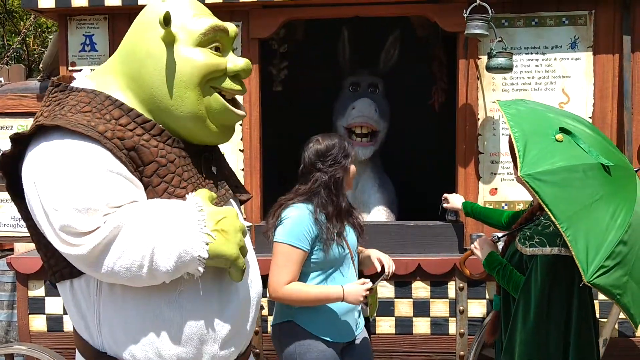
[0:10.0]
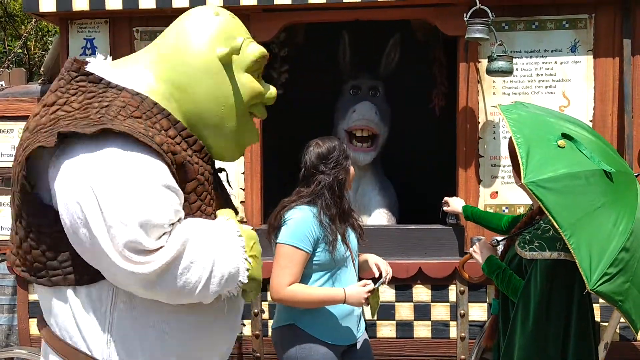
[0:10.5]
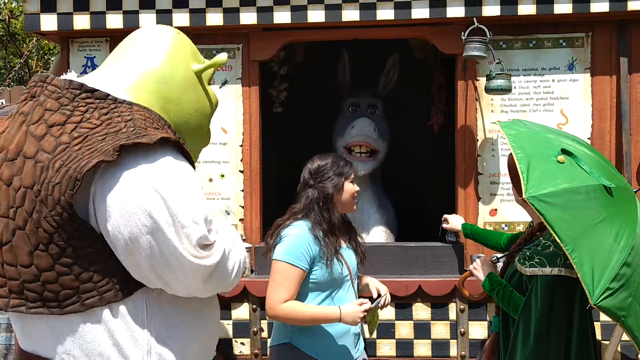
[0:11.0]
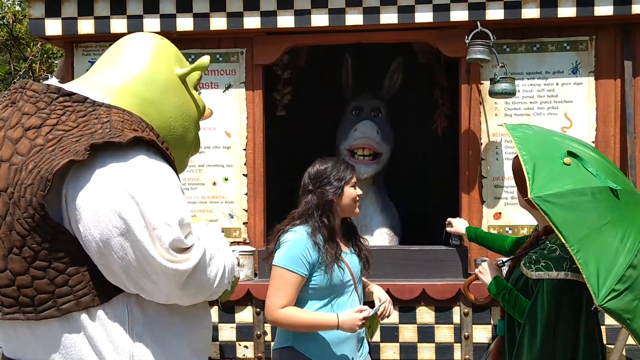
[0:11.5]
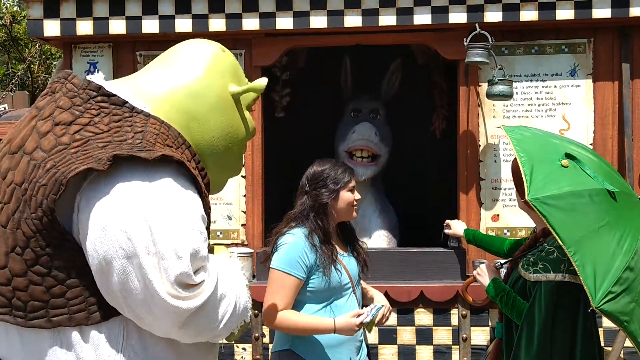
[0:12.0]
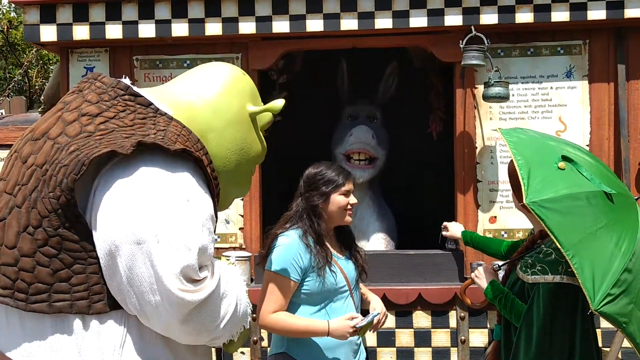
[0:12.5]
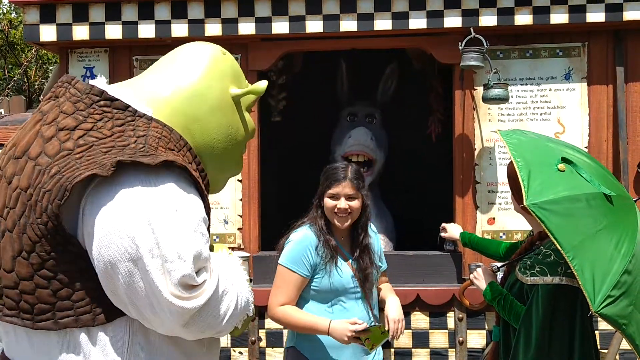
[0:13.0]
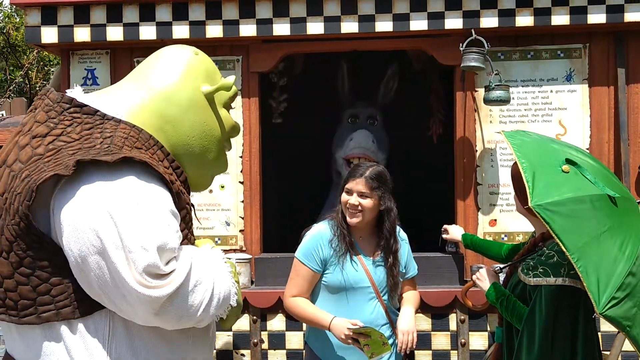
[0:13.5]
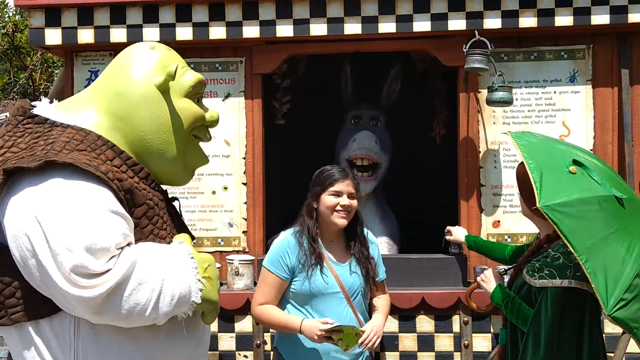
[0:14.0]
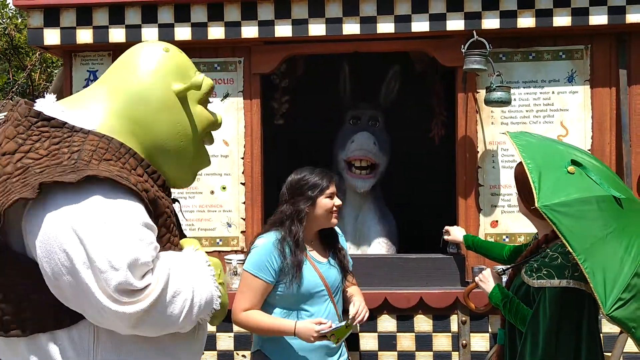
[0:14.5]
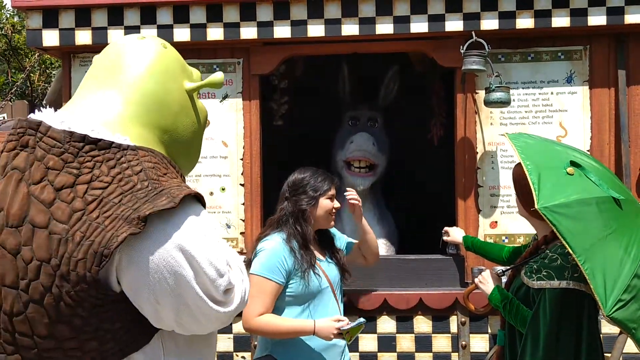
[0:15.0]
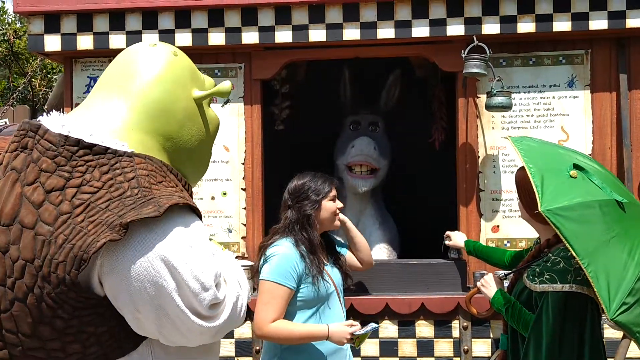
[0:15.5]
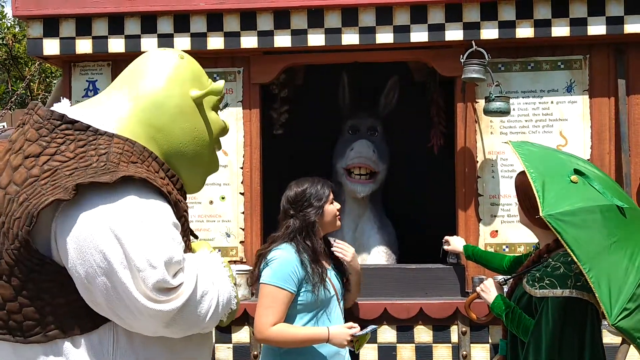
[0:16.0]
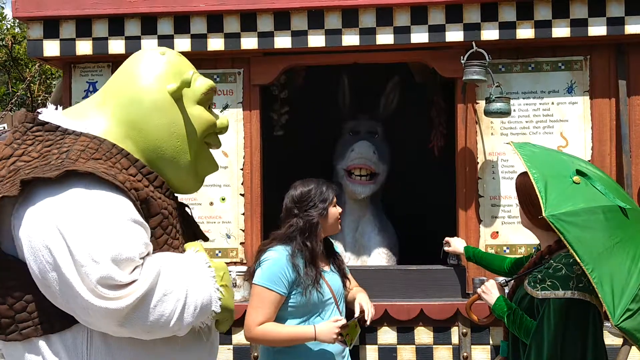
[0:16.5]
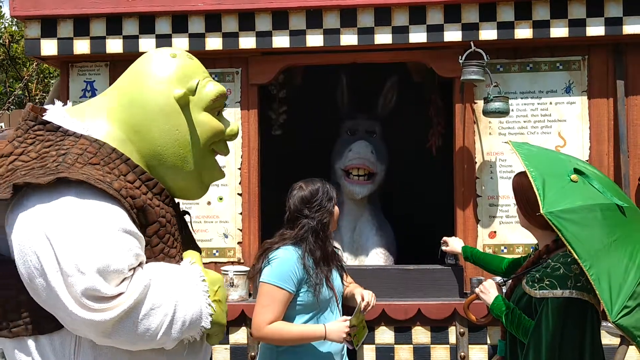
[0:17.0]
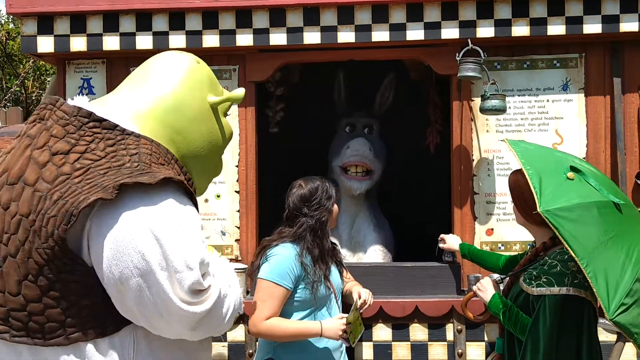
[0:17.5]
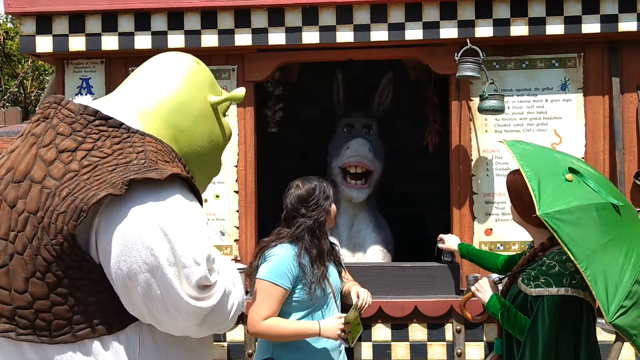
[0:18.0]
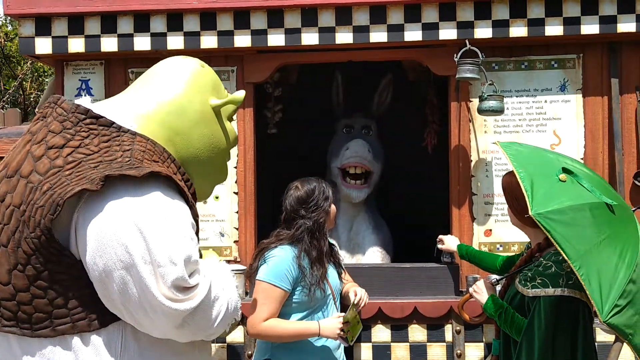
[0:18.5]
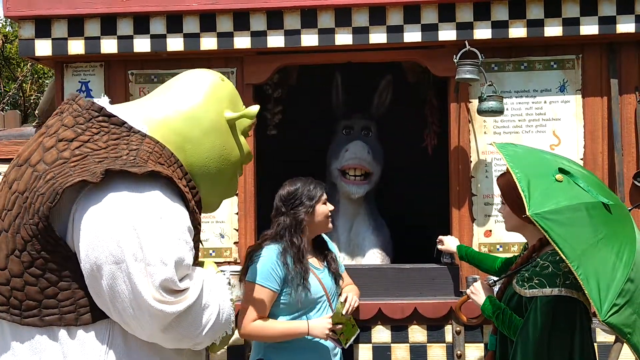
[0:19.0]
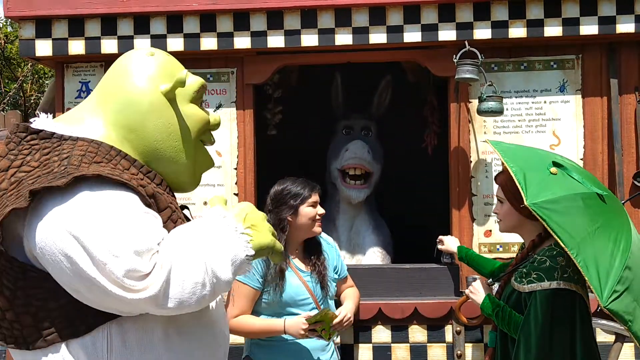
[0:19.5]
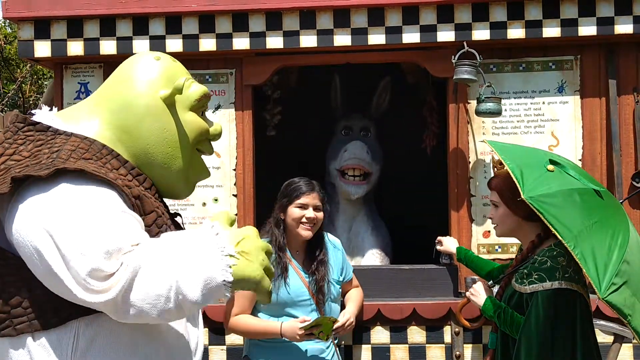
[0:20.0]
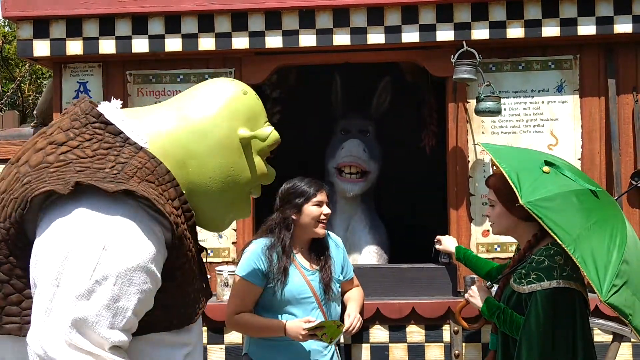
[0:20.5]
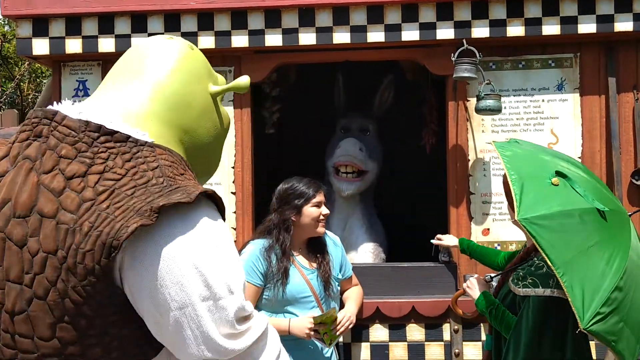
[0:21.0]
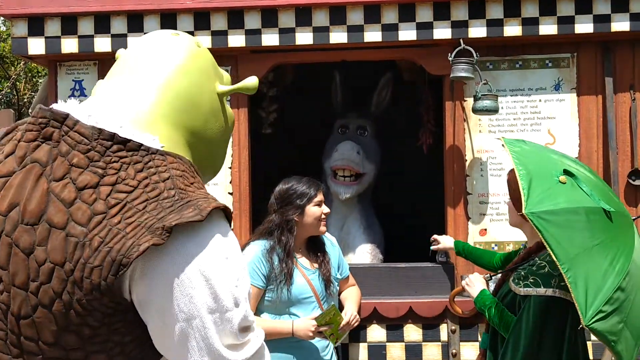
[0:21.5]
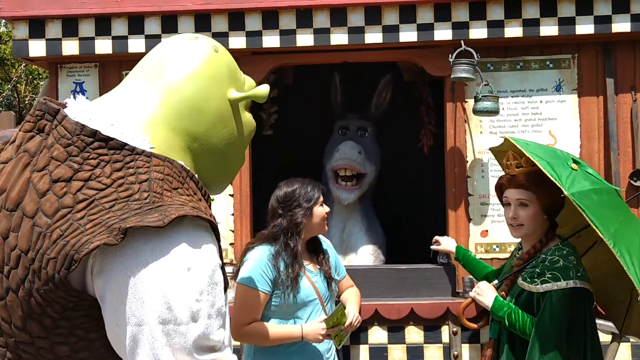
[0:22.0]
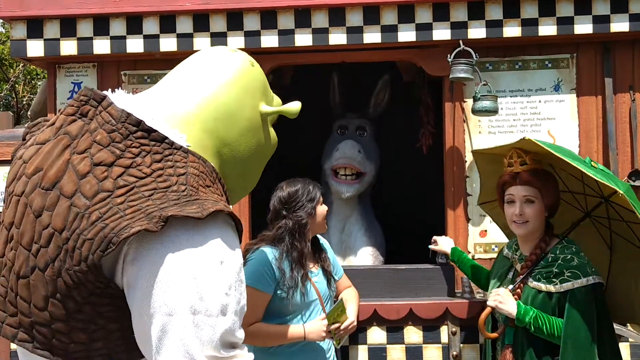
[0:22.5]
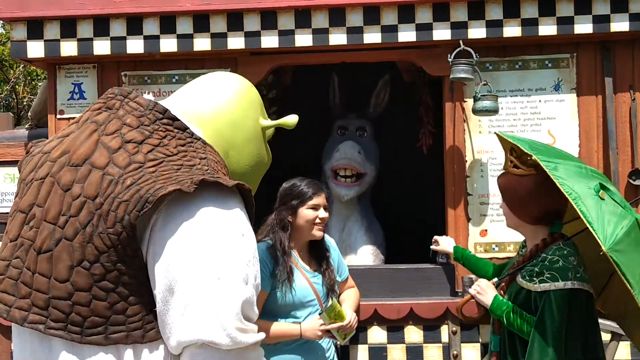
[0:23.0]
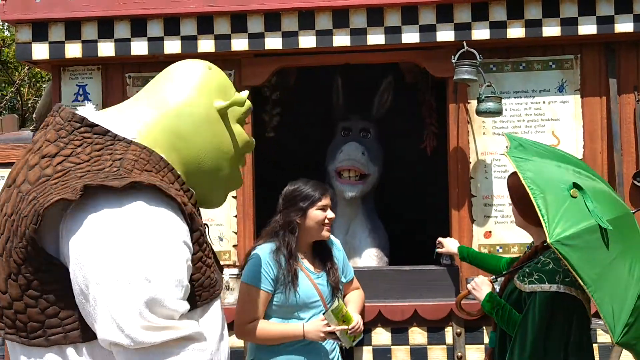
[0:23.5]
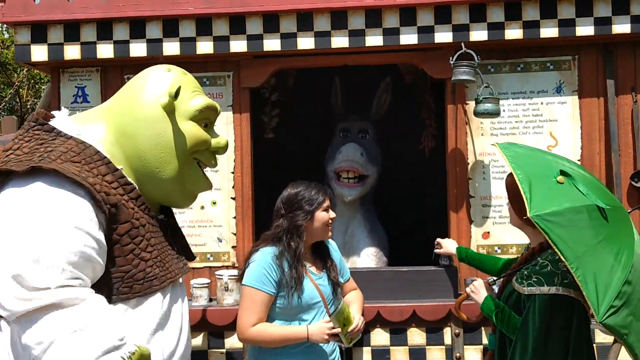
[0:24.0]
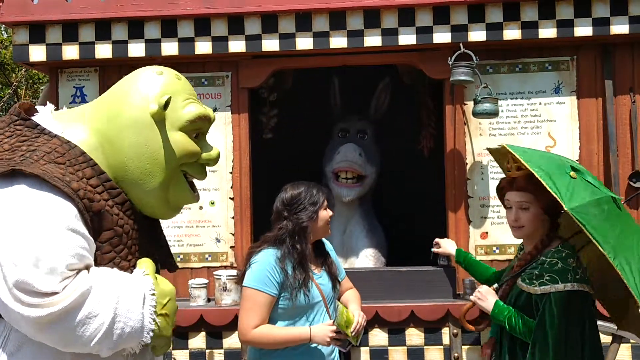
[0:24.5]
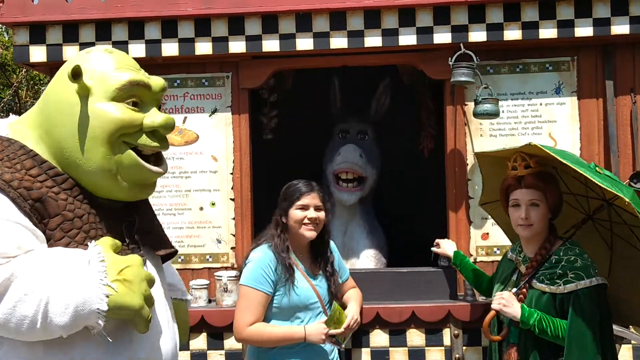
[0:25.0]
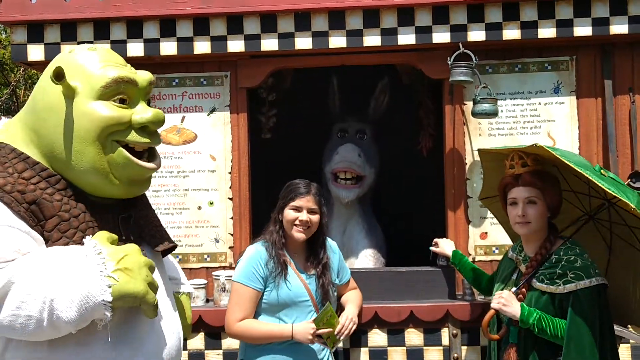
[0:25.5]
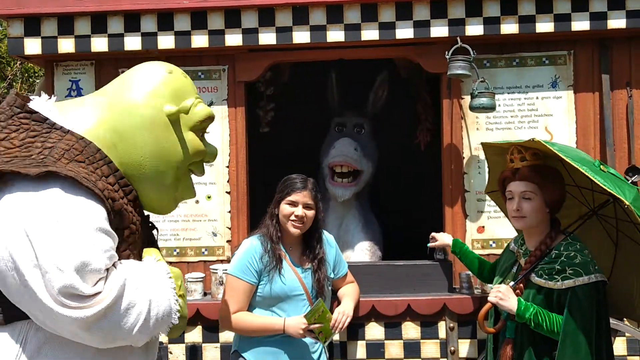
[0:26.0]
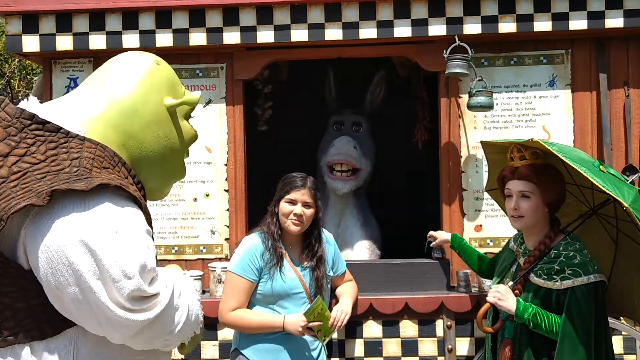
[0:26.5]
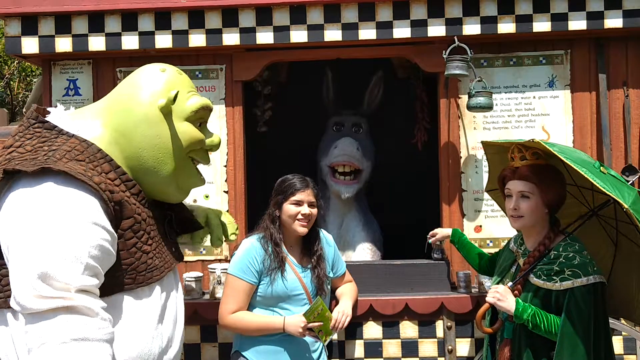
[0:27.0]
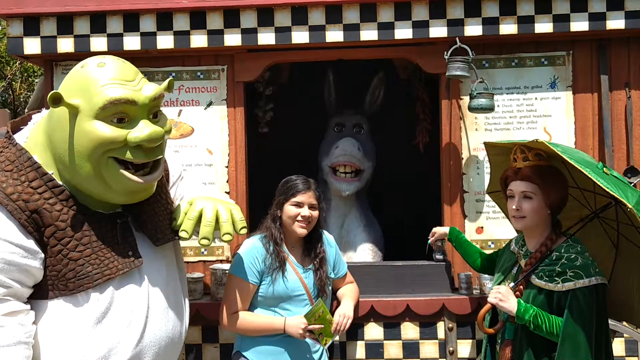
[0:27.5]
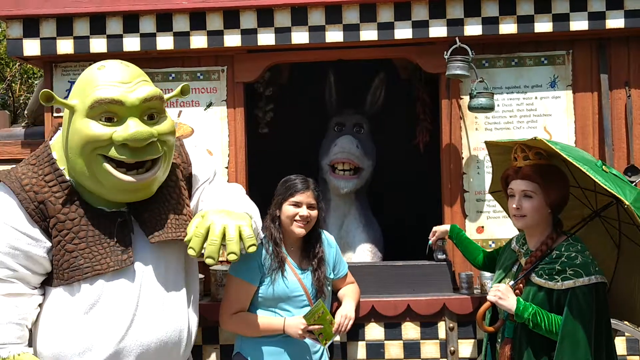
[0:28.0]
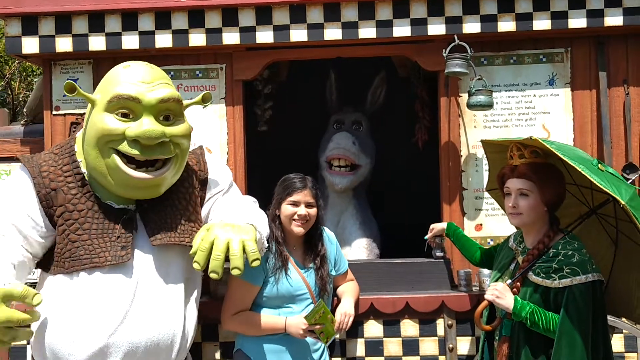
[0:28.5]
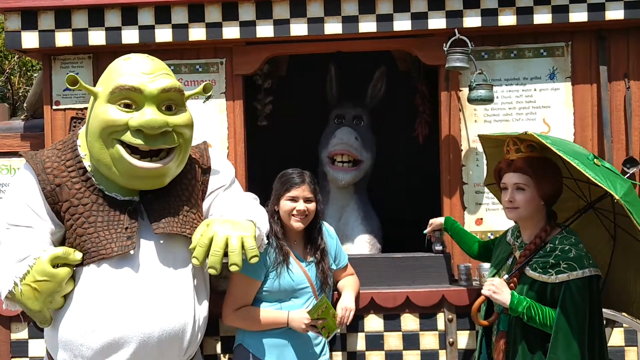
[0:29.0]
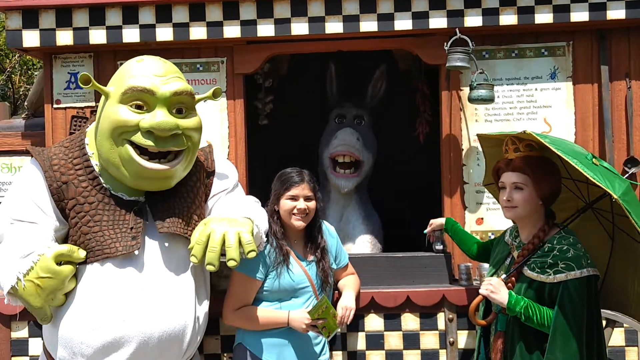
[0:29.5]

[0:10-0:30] The girl in the light aqua top with dark shiny hair, a teenager or maybe in her early 20s, speaks with Shrek, Donkey and Fiona, people dressed in these costumes, at the concession booth. They smile and laugh, and Donkey's mouth can be seen moving with his teeth showing. In the background on the left are trees and some type of poster with an "A" on it. Kind of a rustic-looking little light or something hangs off to the side of the booth outside, and the booth has a black and white checkered front panel beneath the cutout that Donkey is standing behind. Fiona has a green umbrella and a green dress with an ornate green collar. Shrek wears a long-sleeved white shirt that is kind of scalloped at the sleeves. Near the end, the three characters and the girl turn and look at someone, Shrek puts his arm around the girl's shoulder, and they take a picture.